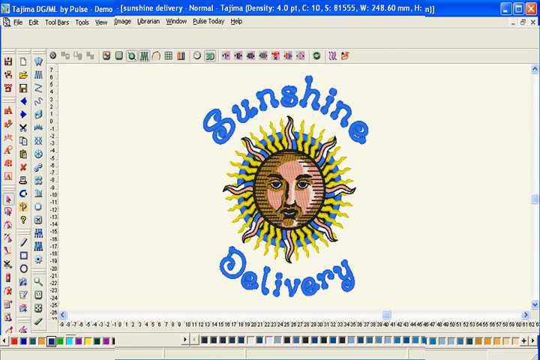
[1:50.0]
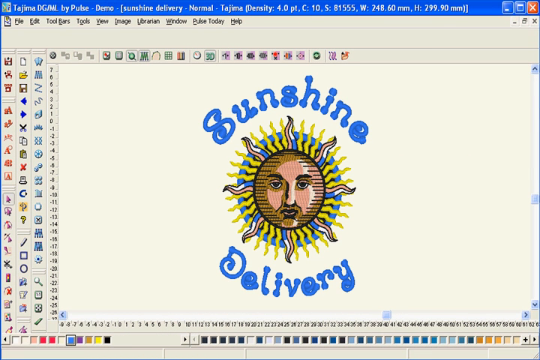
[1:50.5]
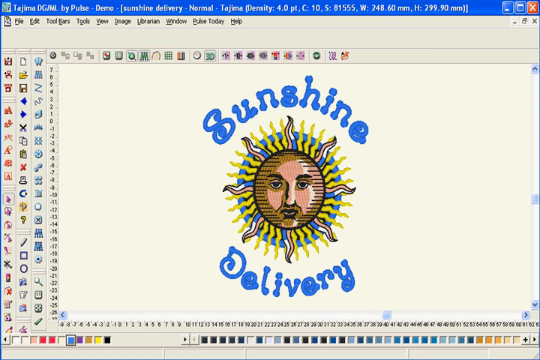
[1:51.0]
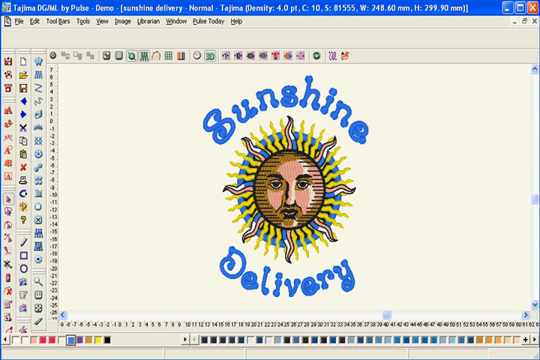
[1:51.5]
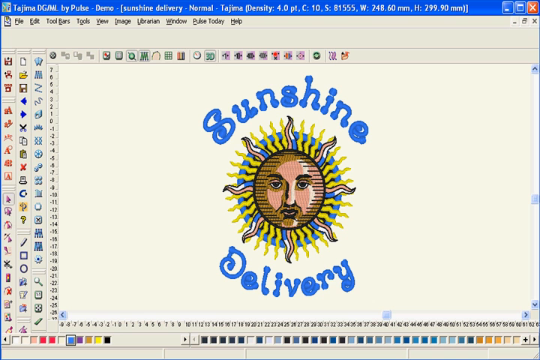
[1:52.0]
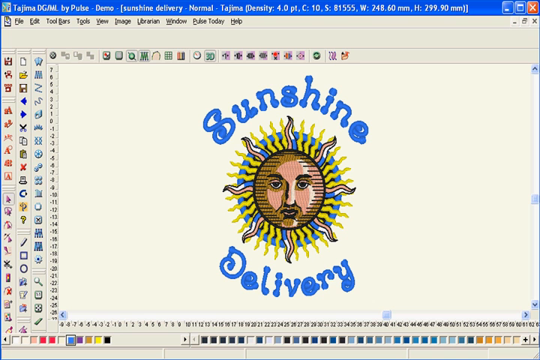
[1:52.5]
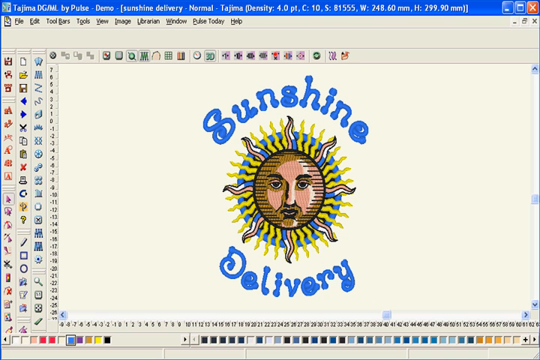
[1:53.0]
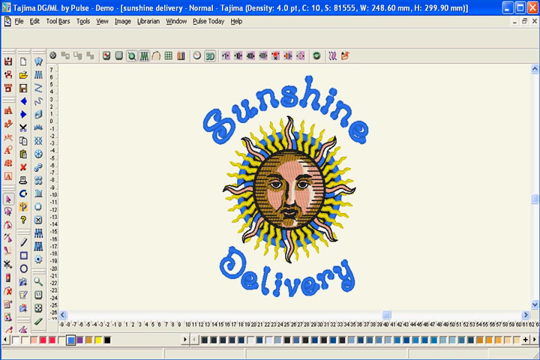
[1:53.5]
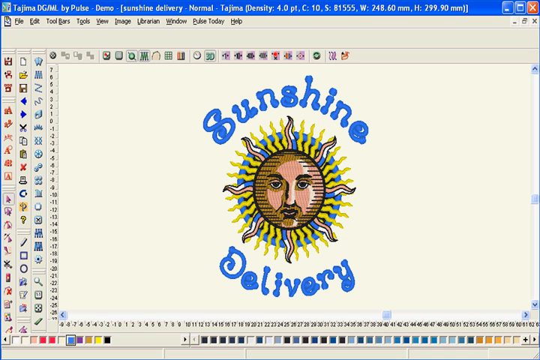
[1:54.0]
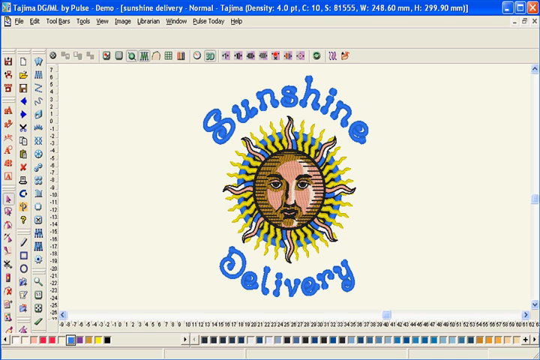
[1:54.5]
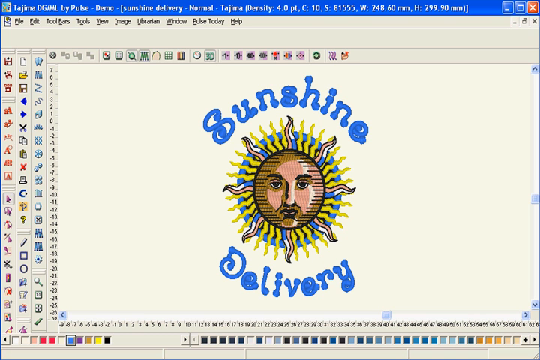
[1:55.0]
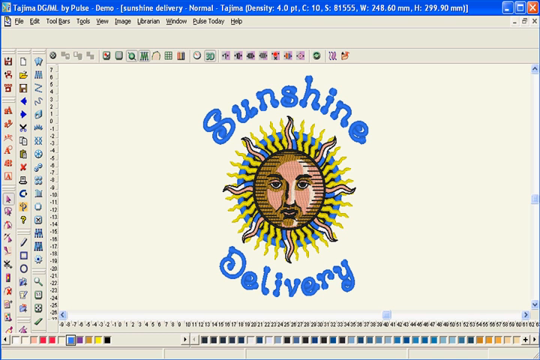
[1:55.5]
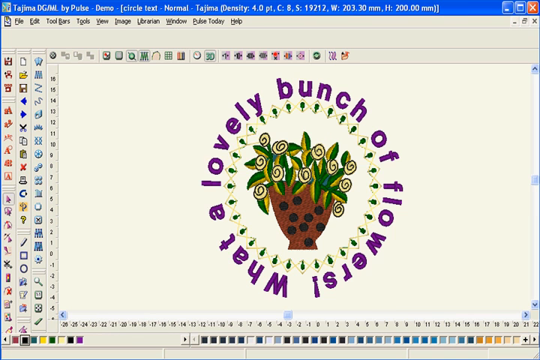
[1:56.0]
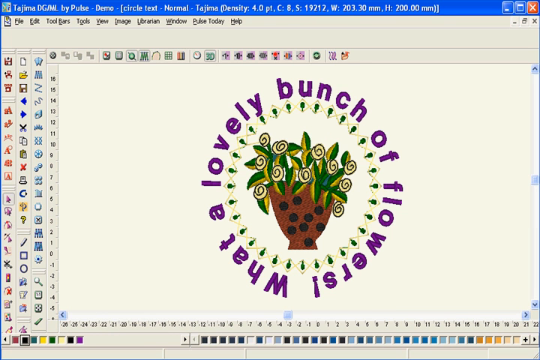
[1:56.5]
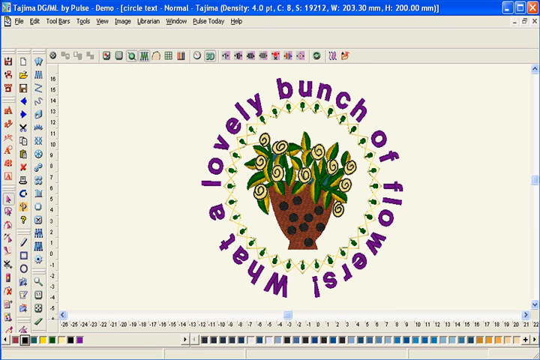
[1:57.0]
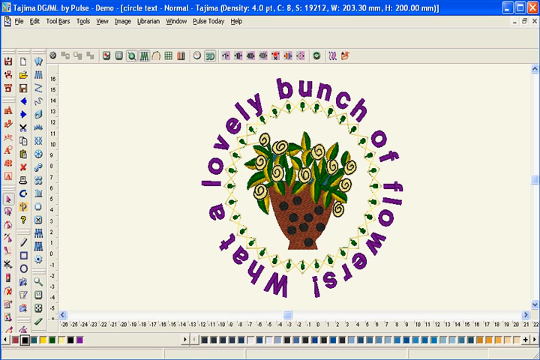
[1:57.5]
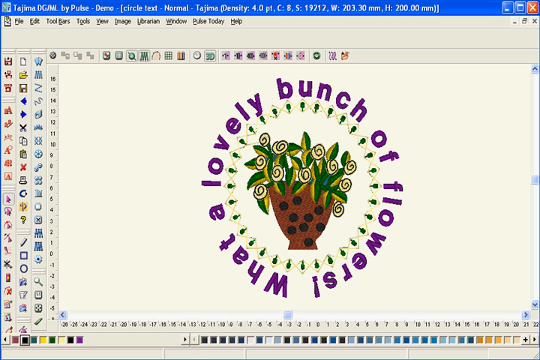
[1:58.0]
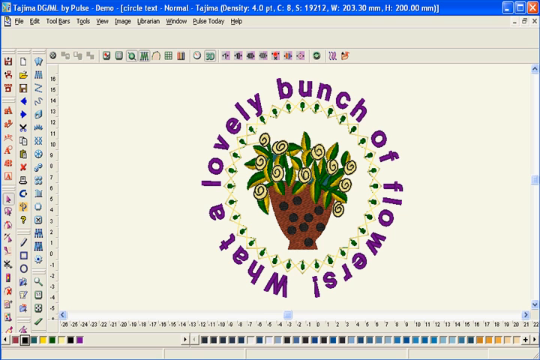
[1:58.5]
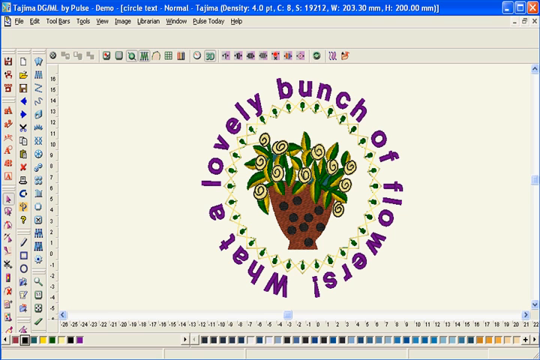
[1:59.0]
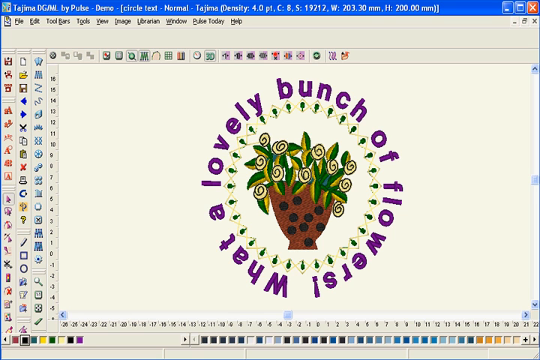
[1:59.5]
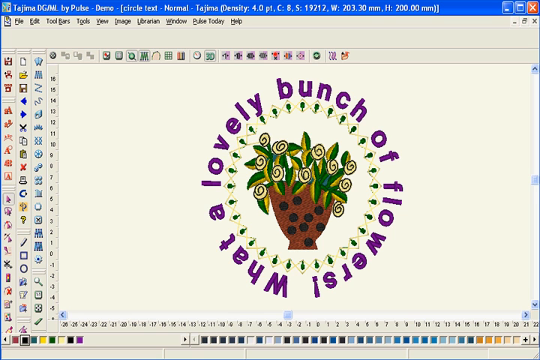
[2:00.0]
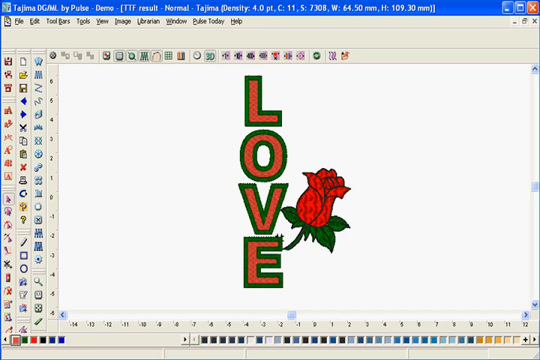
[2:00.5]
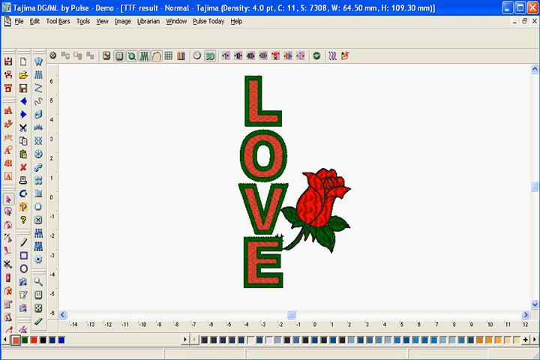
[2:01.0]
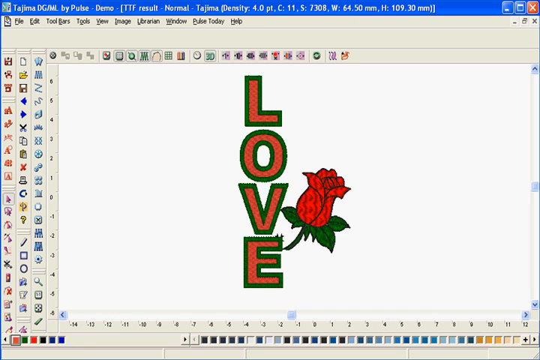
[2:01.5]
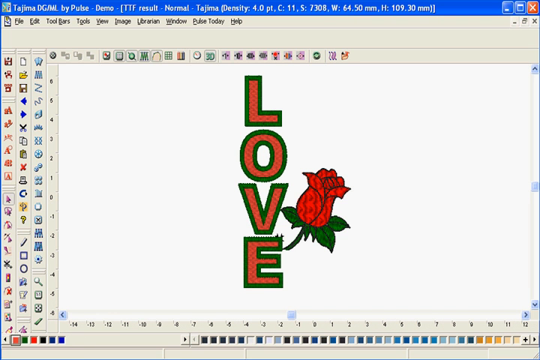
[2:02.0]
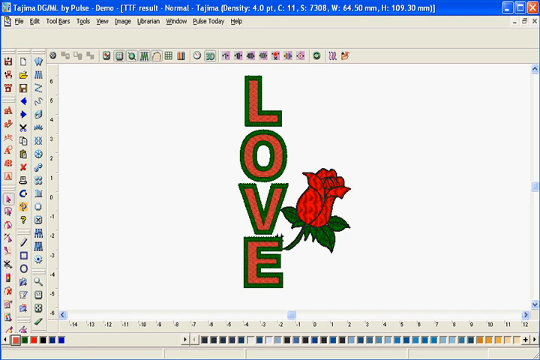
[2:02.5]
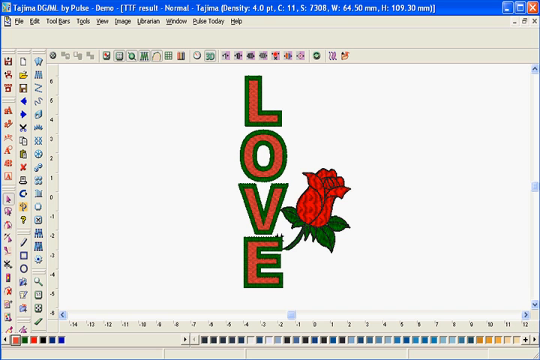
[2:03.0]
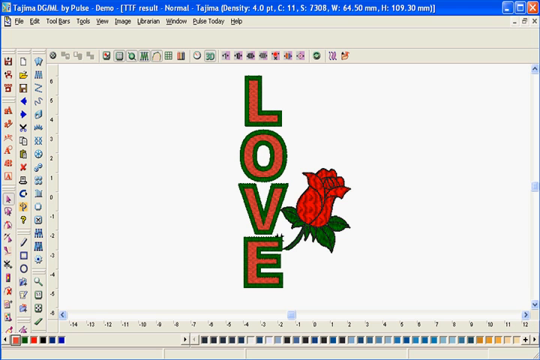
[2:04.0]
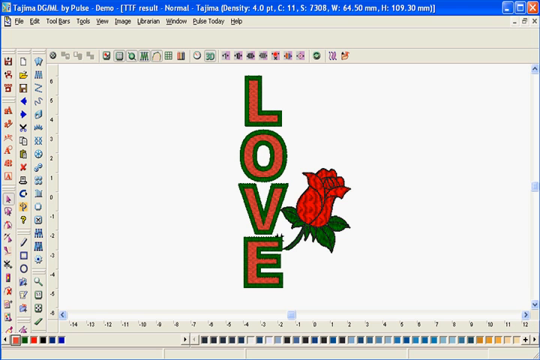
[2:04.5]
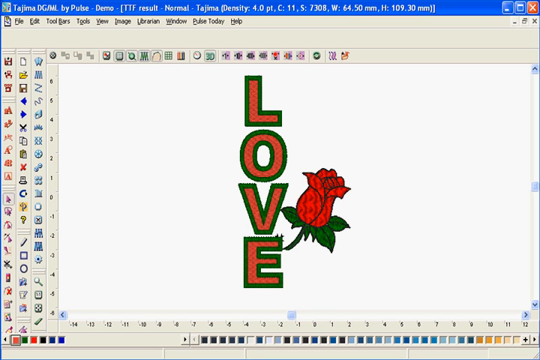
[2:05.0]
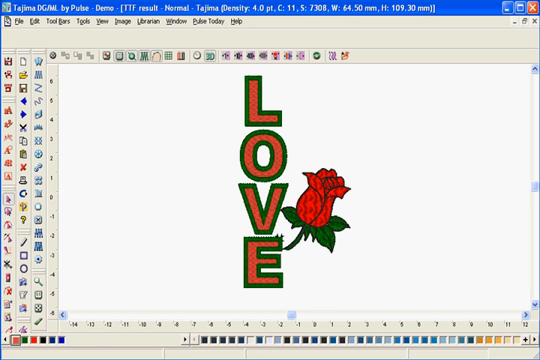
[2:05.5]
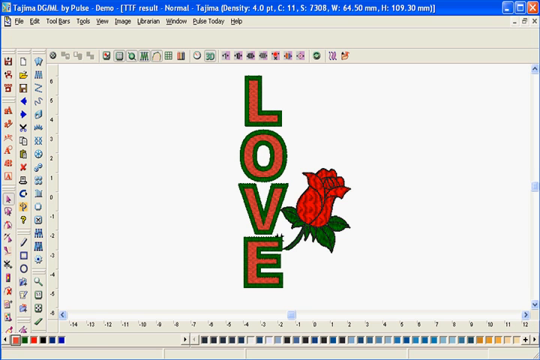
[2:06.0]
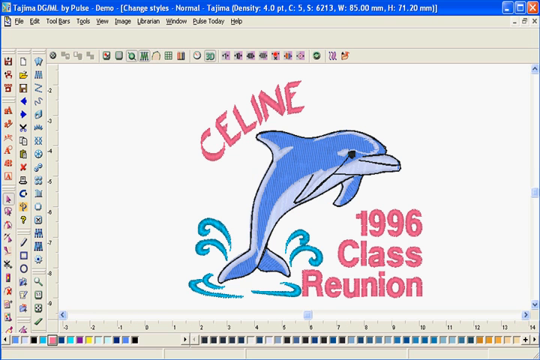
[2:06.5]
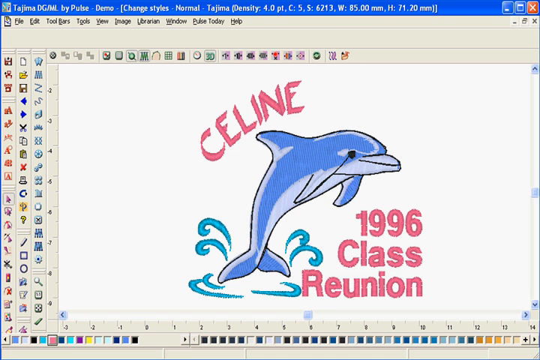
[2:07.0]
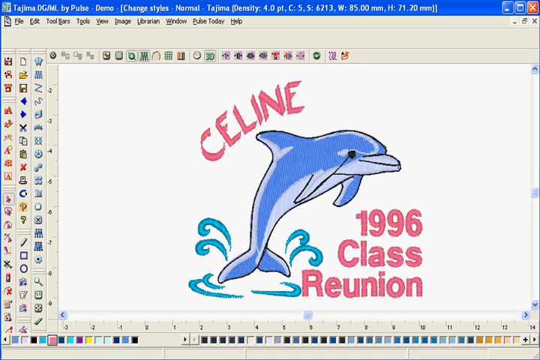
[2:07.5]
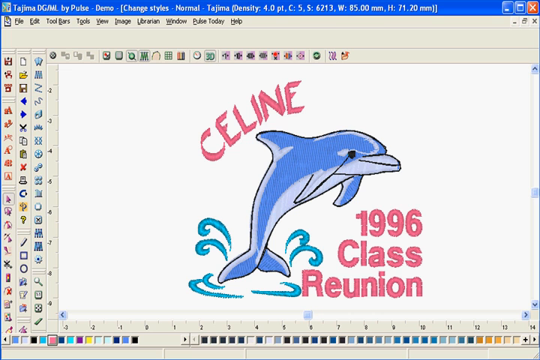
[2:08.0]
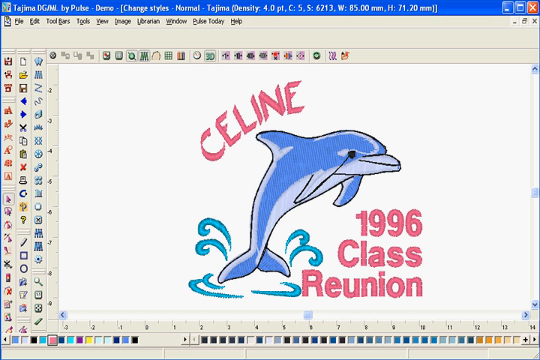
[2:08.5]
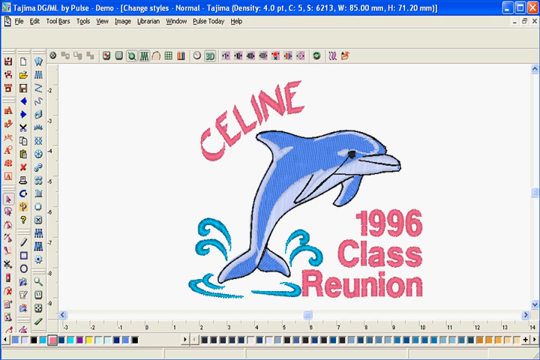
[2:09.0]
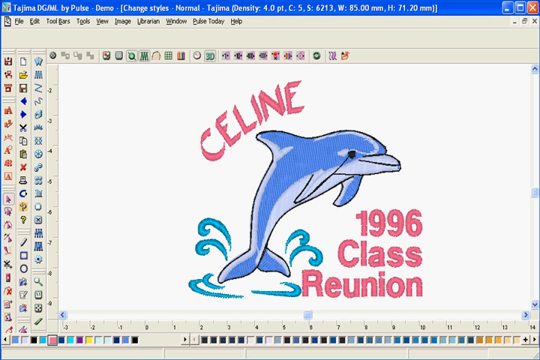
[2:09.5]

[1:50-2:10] A special font called "Sunshine Delivery" is shown with a sun in the middle, with curvy yellow spikes coming out all around it, some of them brown or white, against what looks like a blue background. The words "Sunshine Delivery" wrap around the sun, with "Sunshine" at the top and "Delivery" at the bottom, in a blue font. Next, the text "what a lovely bunch of flowers" appears with flowers in the middle, a small piece of stitching that could go on an item. Then the word "Love" appears, written vertically with the L at the top, and a rose beside it on the right. A "1996 class reunion" design is also shown, featuring a dolphin coming out of the water.